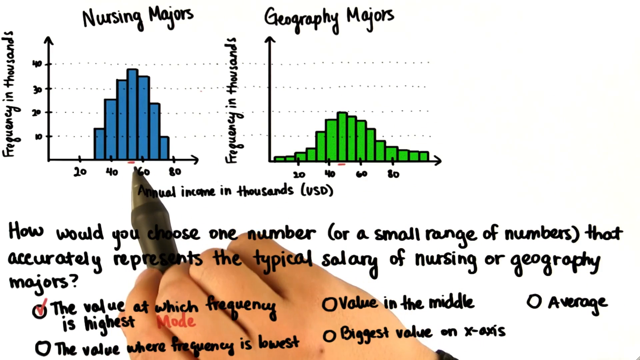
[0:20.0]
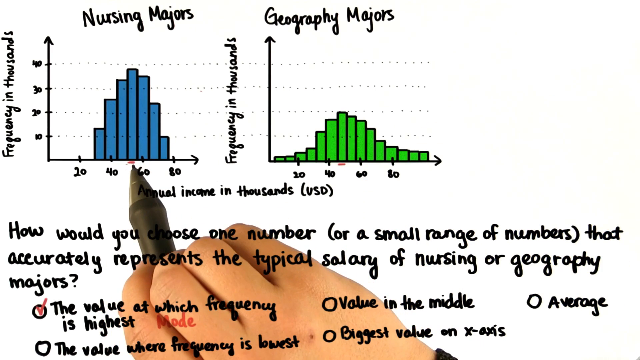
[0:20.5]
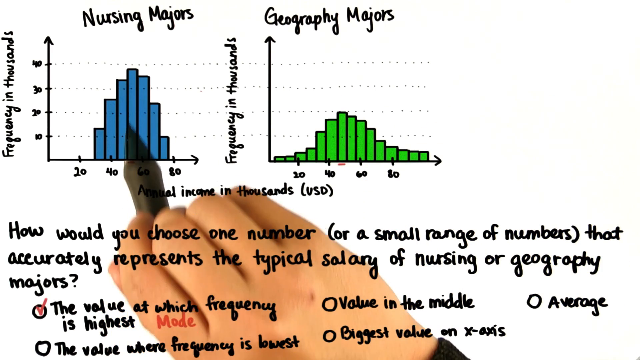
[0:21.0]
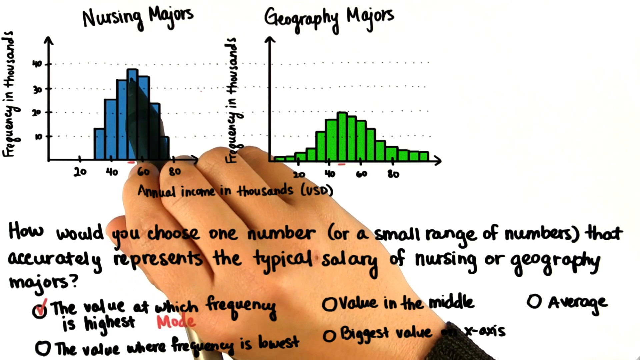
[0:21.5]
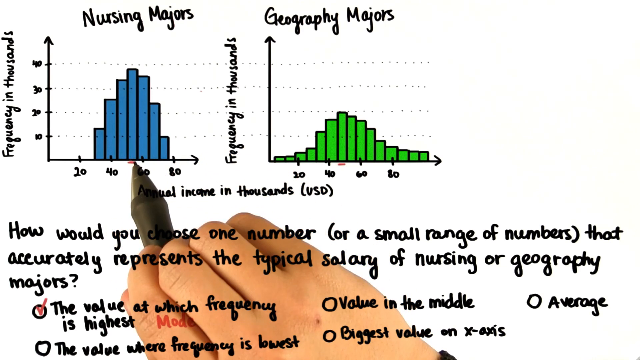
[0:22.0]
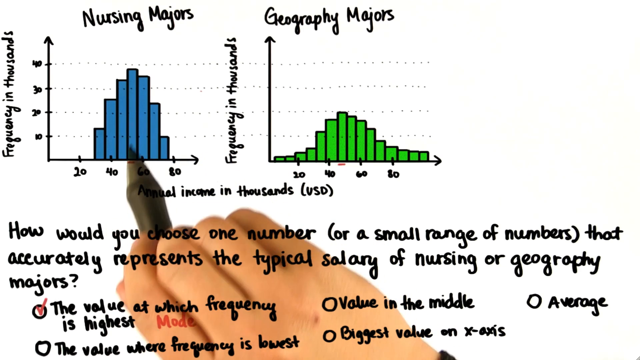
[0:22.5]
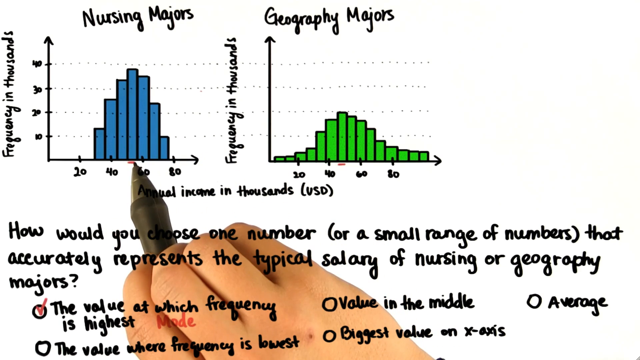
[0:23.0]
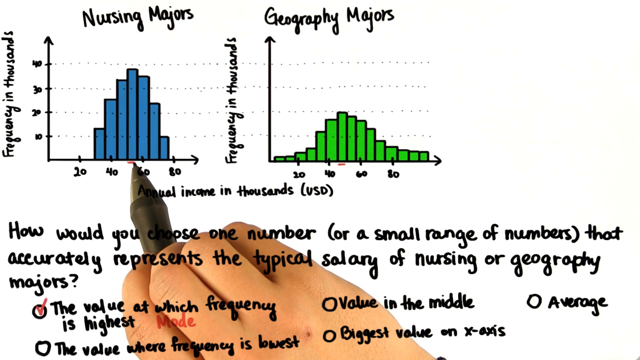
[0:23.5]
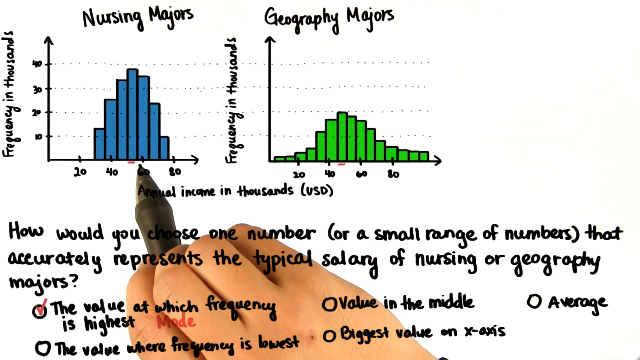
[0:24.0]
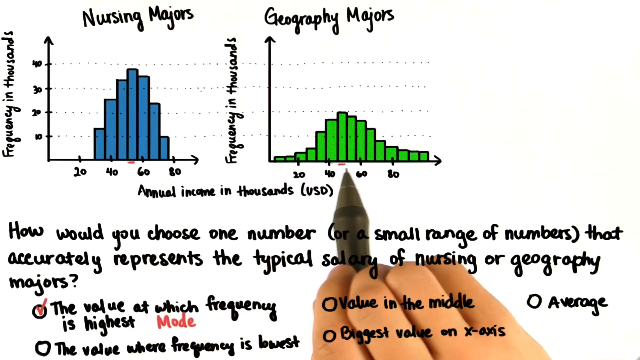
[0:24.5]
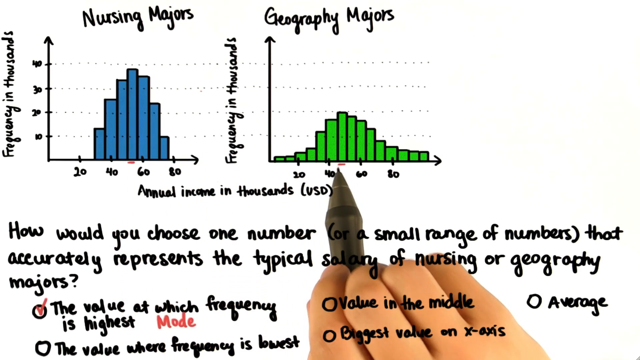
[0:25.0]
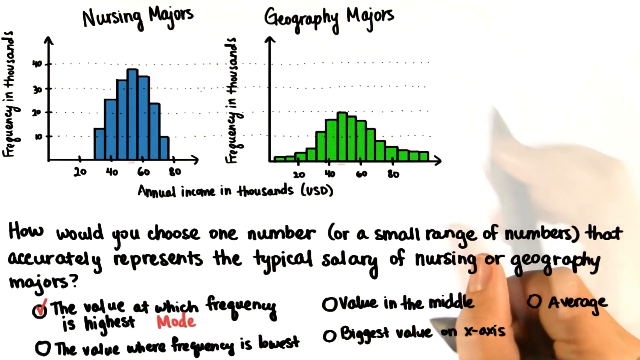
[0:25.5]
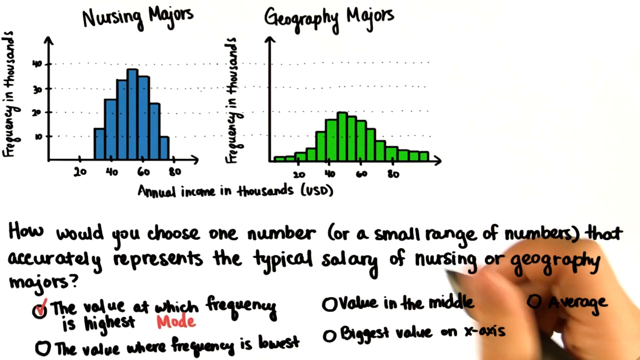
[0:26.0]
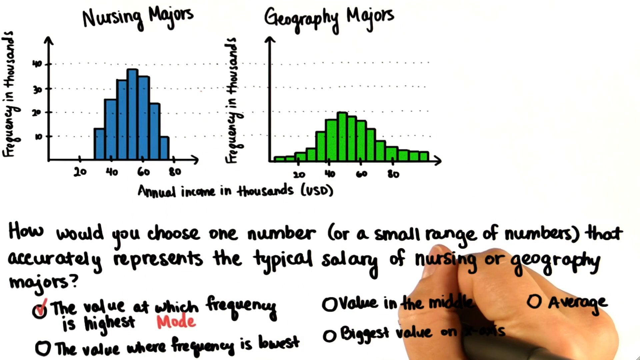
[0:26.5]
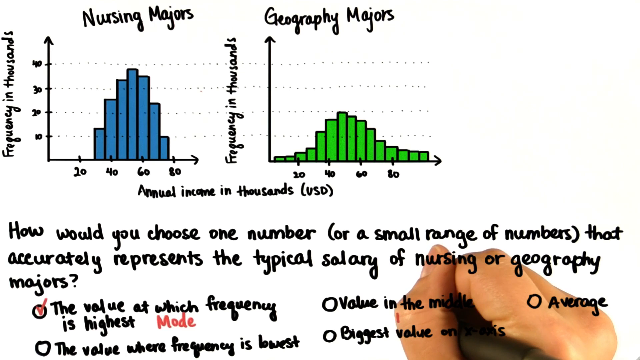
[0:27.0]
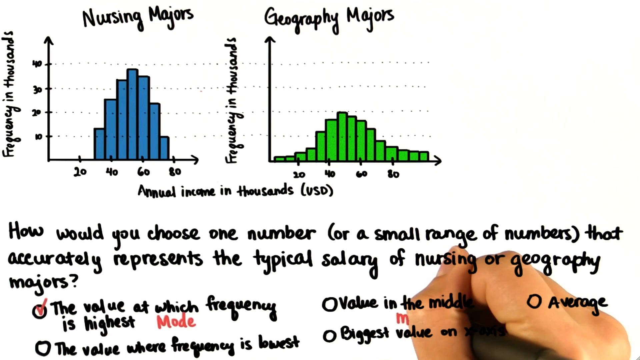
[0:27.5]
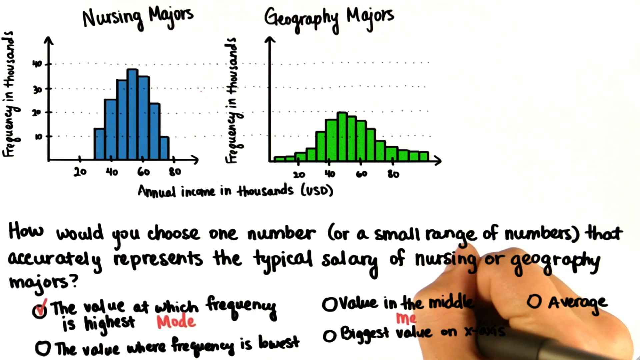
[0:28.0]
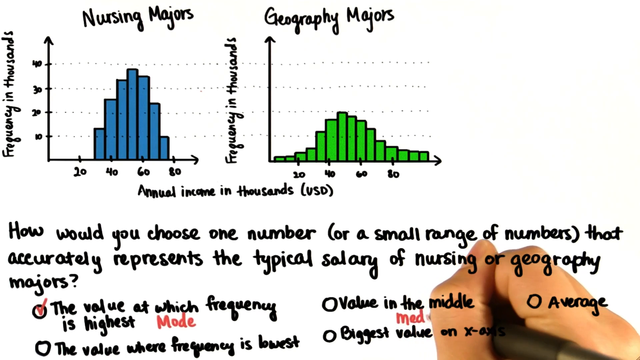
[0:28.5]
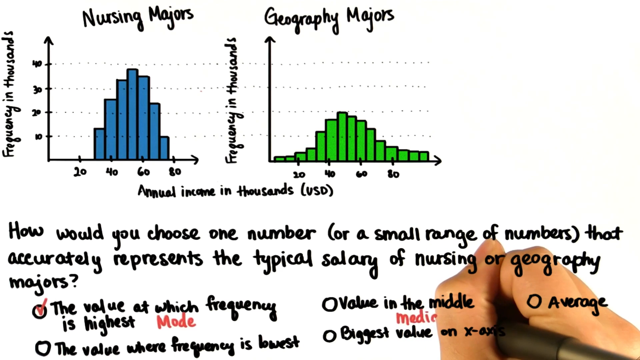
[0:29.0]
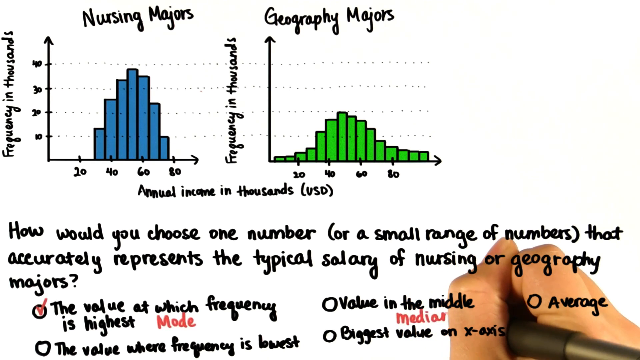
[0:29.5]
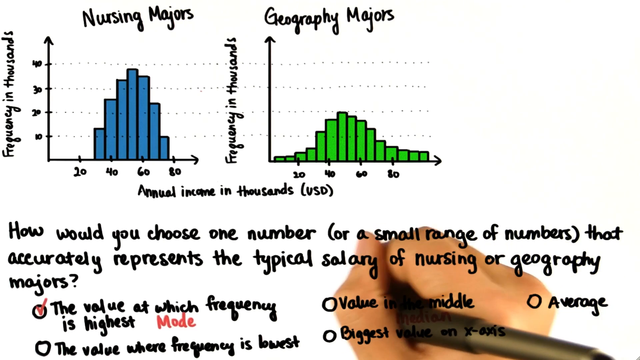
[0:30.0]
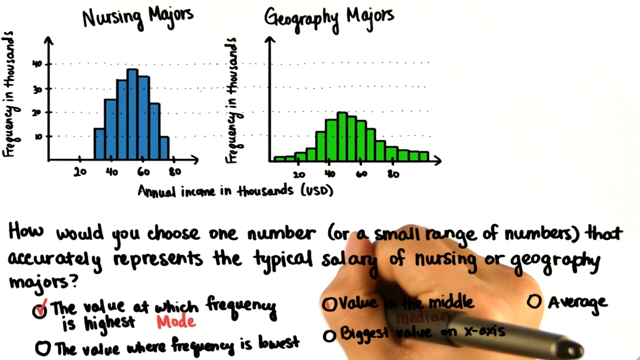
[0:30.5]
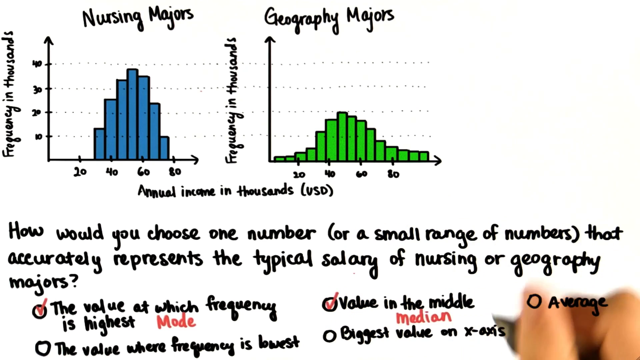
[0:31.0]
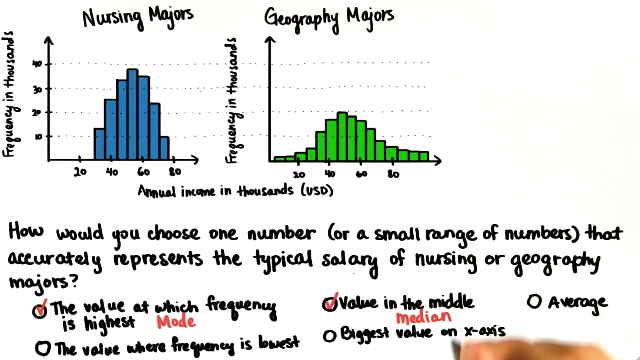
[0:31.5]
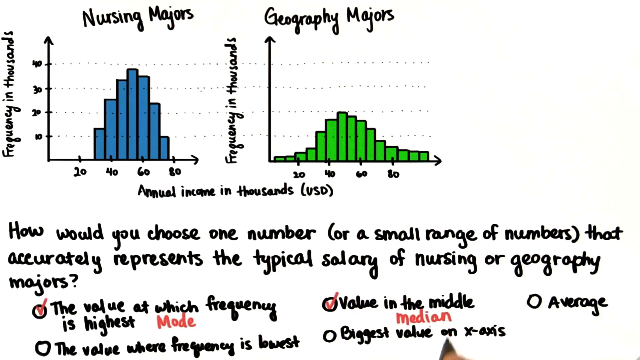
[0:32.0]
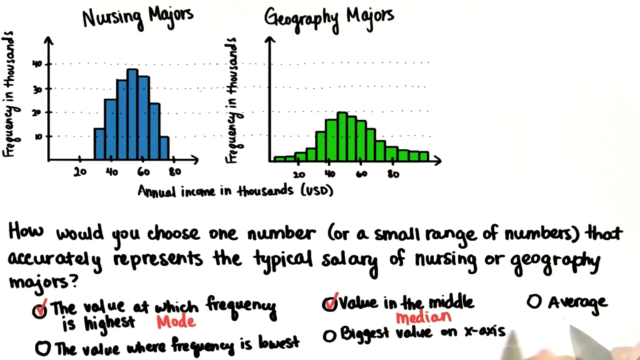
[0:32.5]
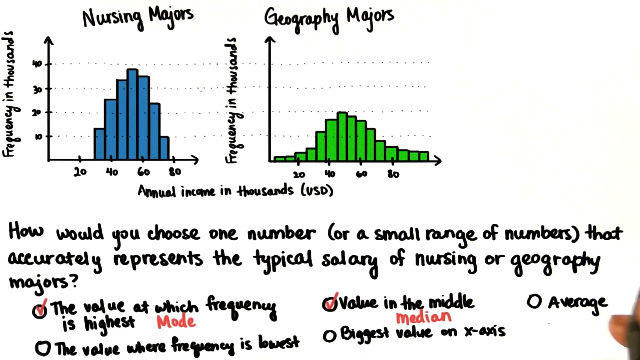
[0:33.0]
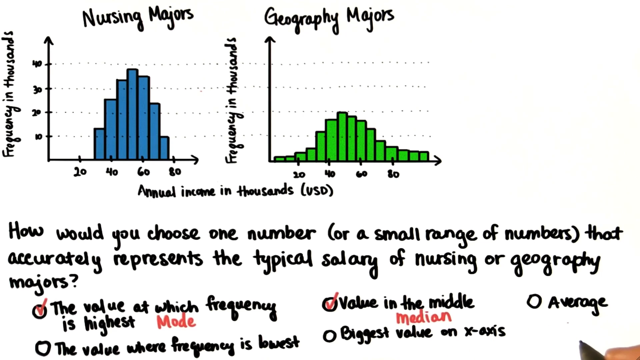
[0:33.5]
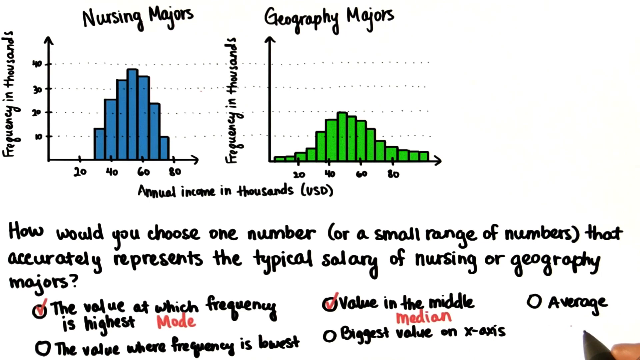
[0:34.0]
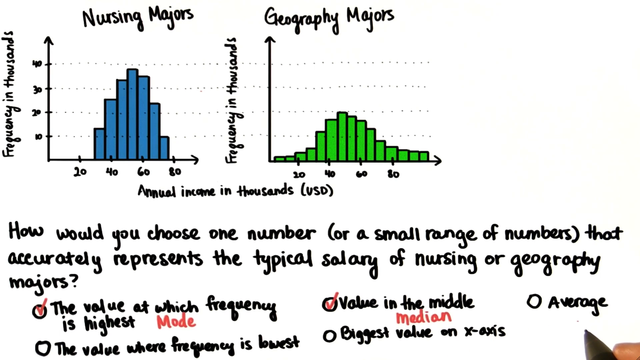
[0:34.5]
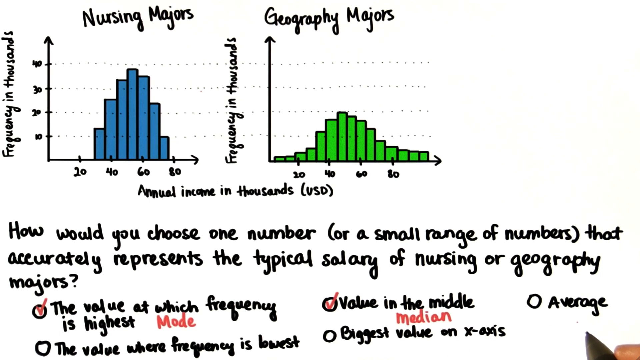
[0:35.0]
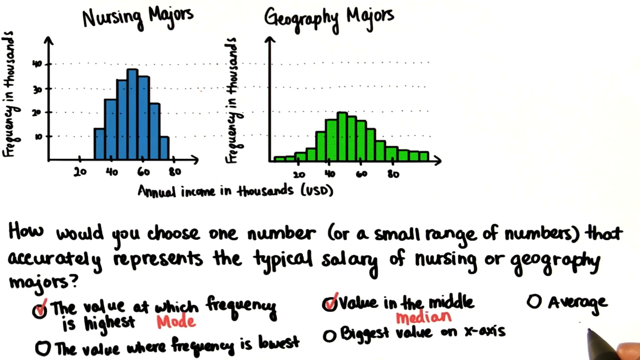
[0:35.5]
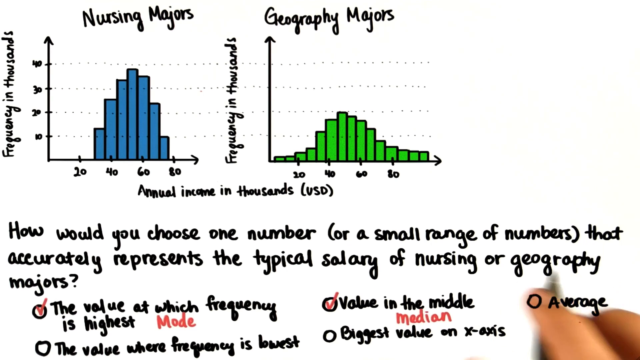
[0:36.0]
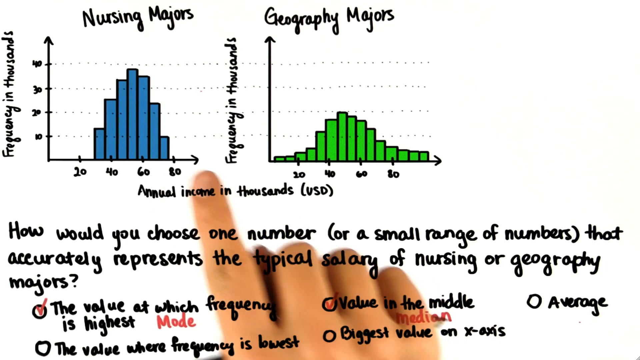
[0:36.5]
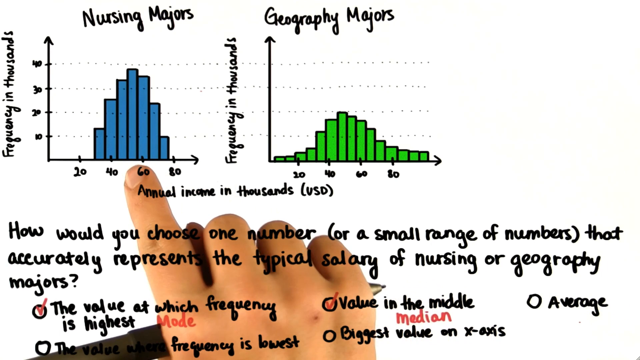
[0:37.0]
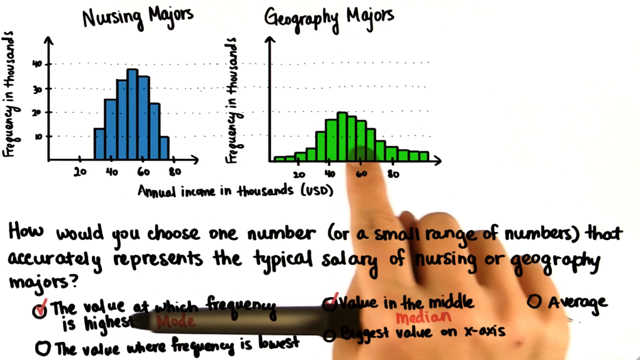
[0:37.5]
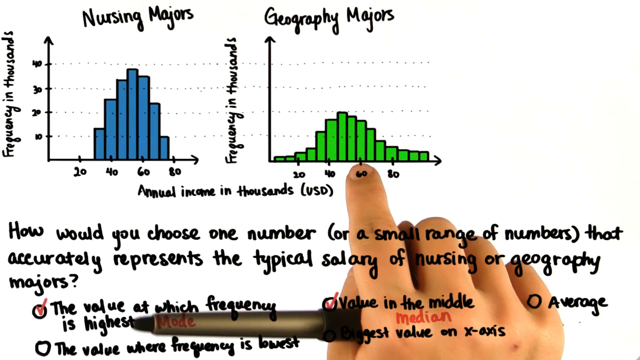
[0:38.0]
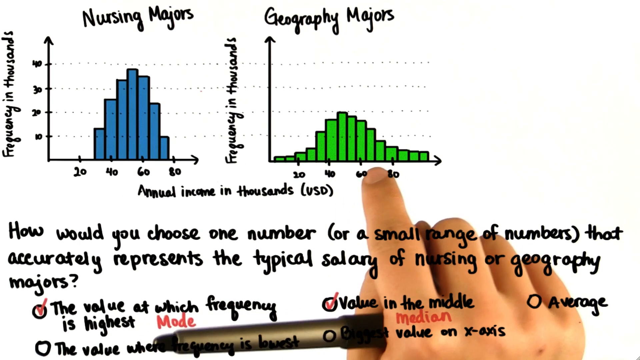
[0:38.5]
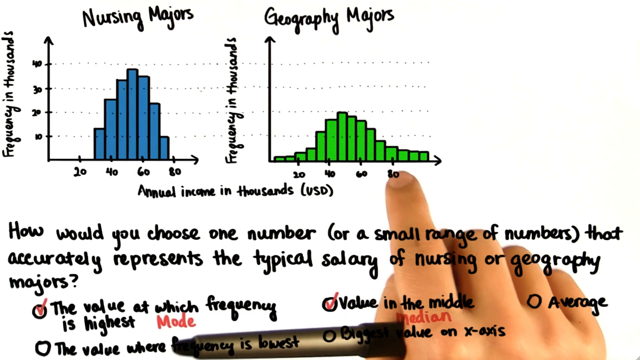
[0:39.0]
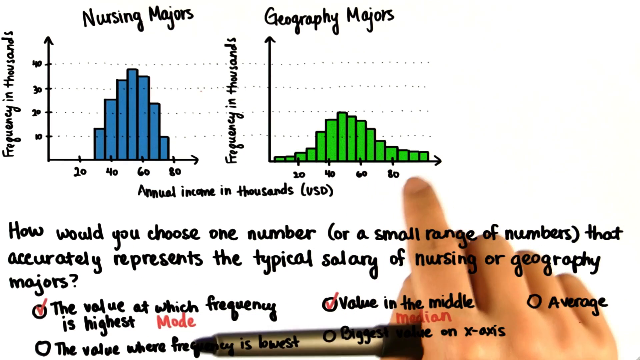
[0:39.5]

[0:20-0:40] Two graphs appear on a white page. On the left graph, the vertical axis runs from 10 to 40 and is labeled "frequency in thousands", while the horizontal axis runs from 20 to 80 and is labeled "annual increase in thousand", in US dollars. The first graph, for nursing majors, has blue bars, and the next graph, for geography majors, has green bars. A hand holding a black pen hovers between the two graphs, explaining. Below is a question: "how would you choose a number for a small range of numbers that are going to represent the typical salary of" nursing or geography majors. At the bottom the answers read "the value at which frequency is highest", in the middle "value in the middle", and on the right end "average".